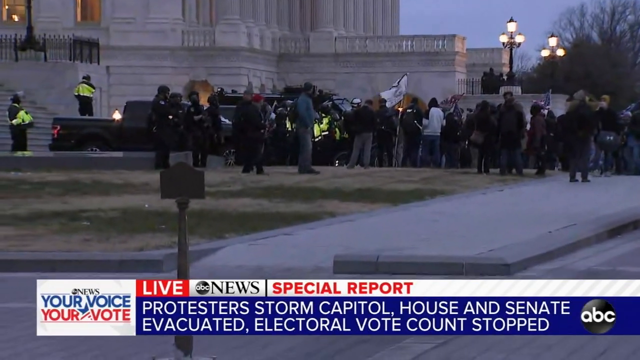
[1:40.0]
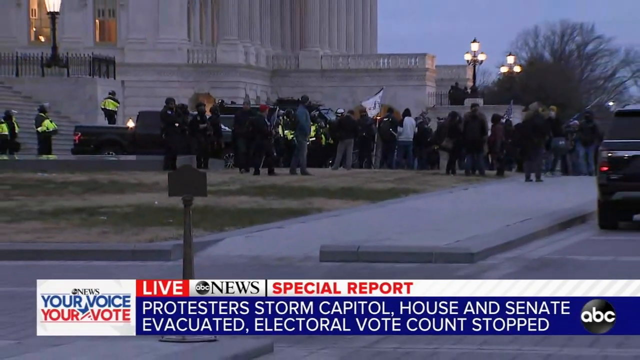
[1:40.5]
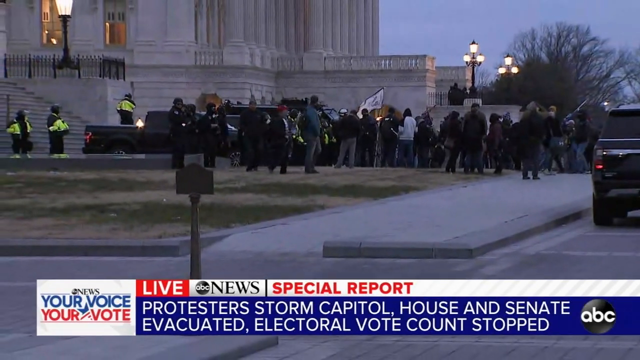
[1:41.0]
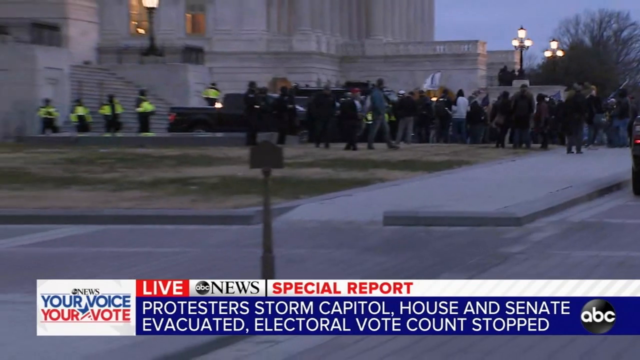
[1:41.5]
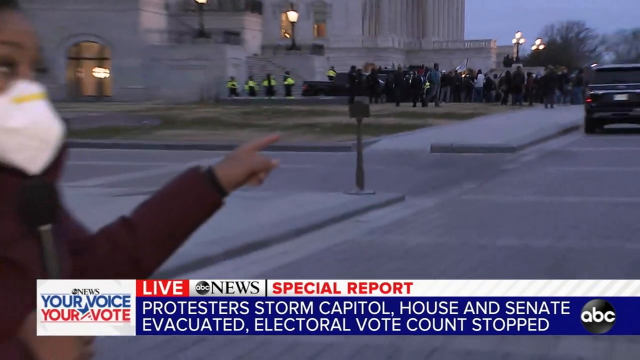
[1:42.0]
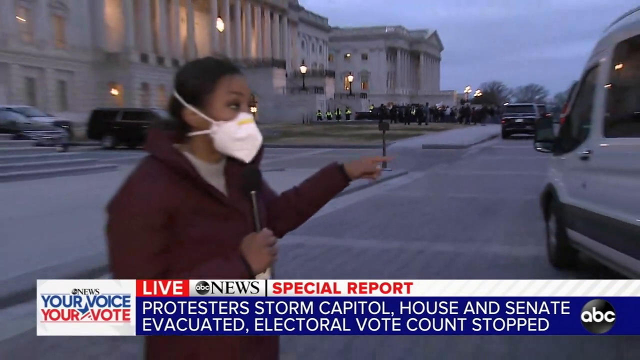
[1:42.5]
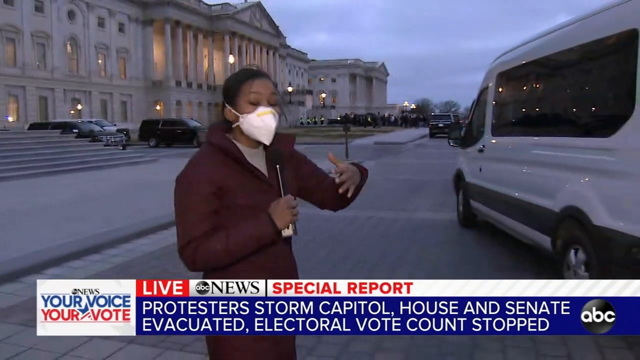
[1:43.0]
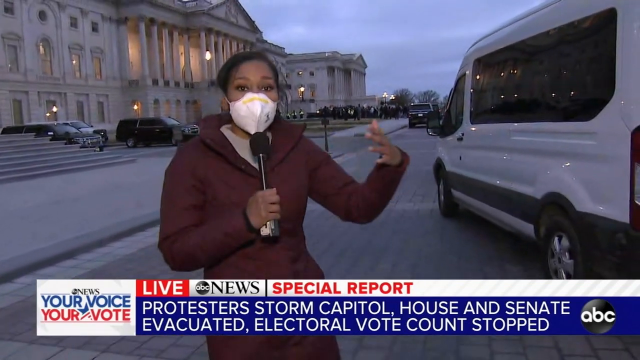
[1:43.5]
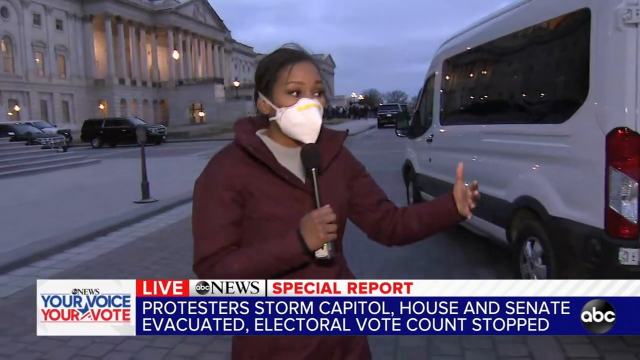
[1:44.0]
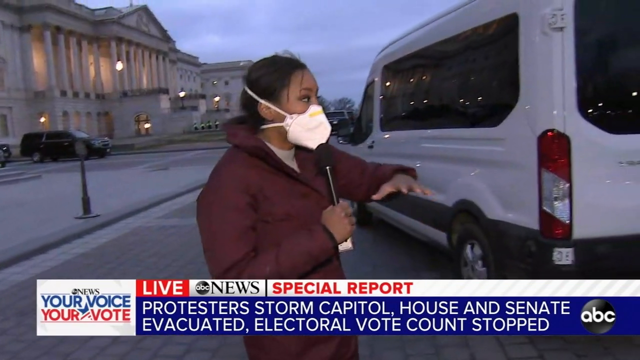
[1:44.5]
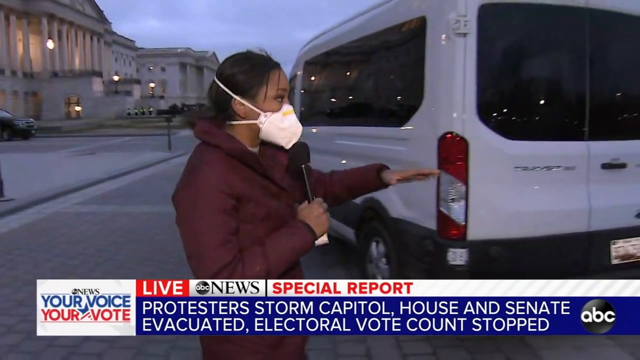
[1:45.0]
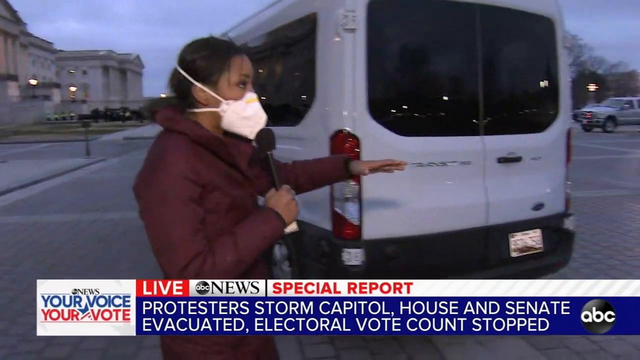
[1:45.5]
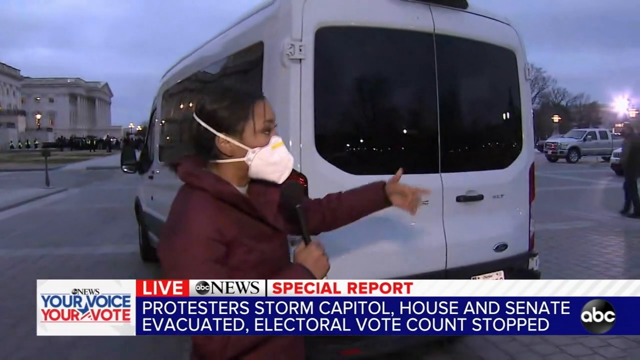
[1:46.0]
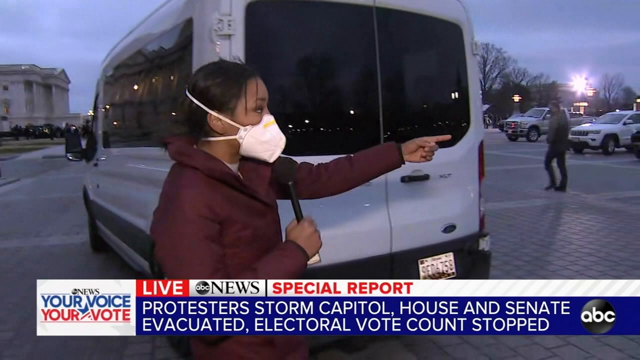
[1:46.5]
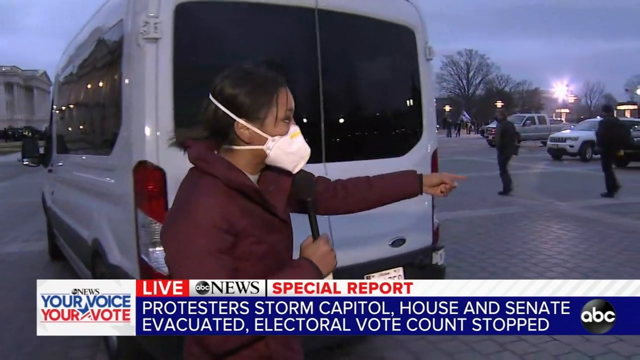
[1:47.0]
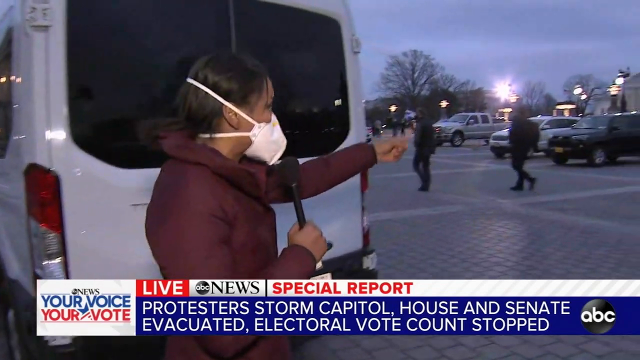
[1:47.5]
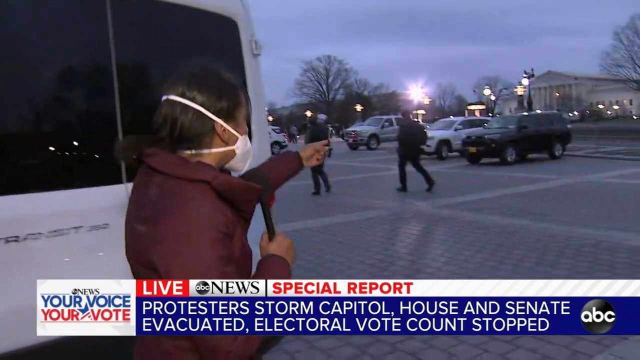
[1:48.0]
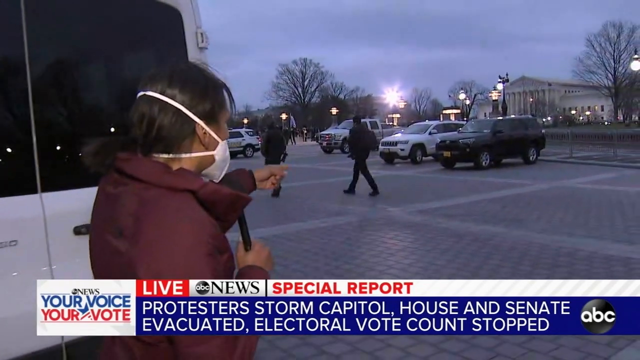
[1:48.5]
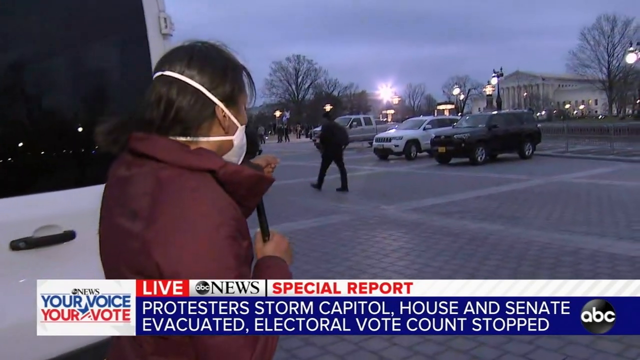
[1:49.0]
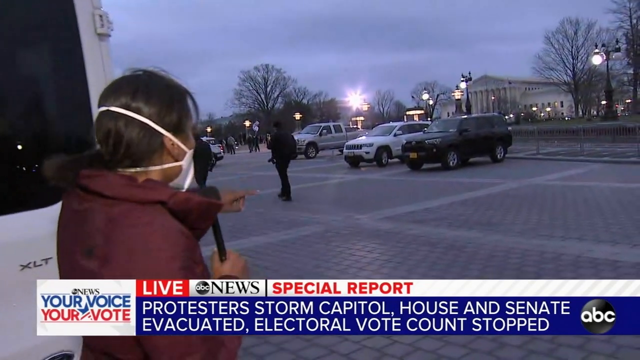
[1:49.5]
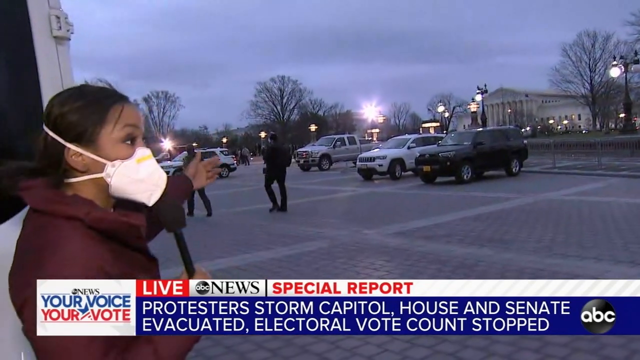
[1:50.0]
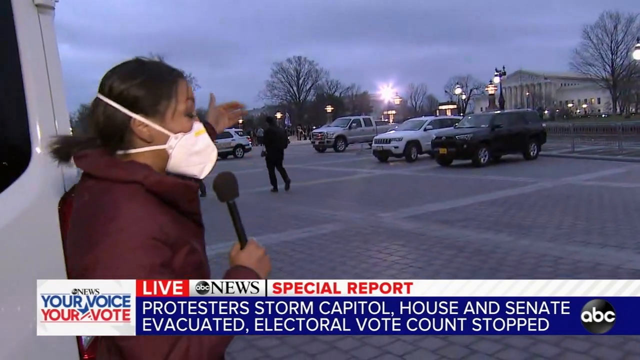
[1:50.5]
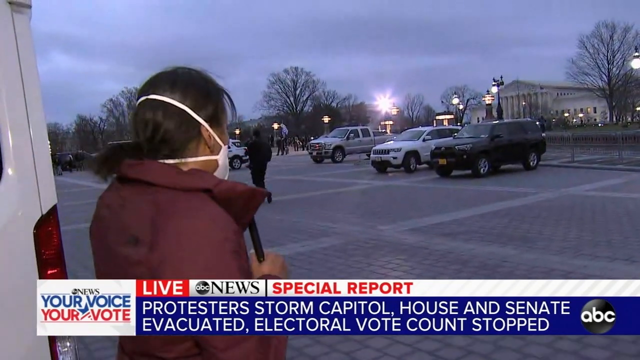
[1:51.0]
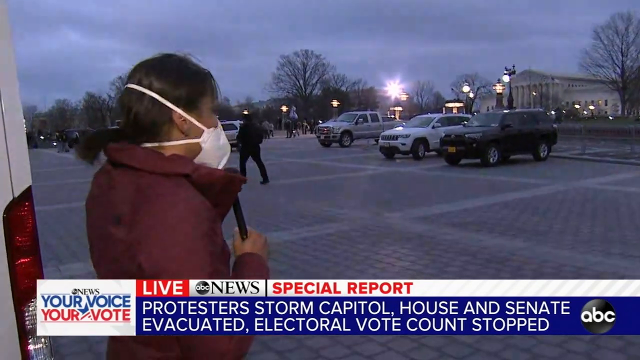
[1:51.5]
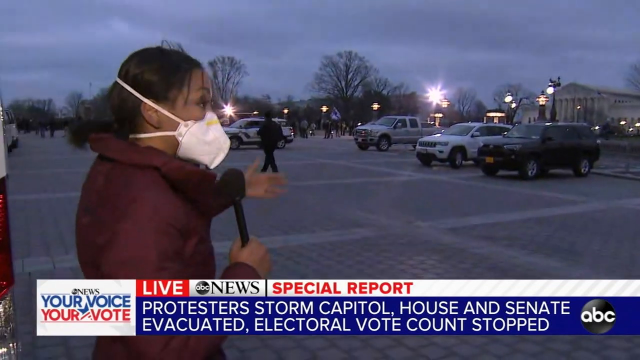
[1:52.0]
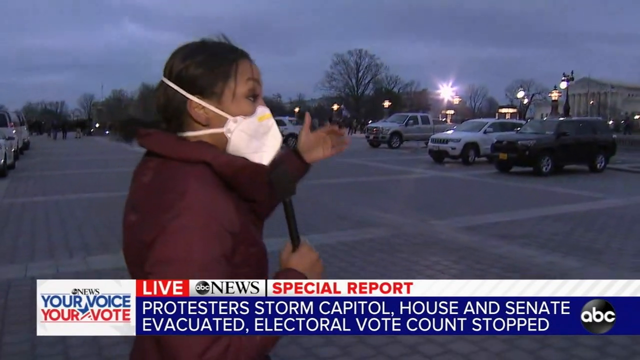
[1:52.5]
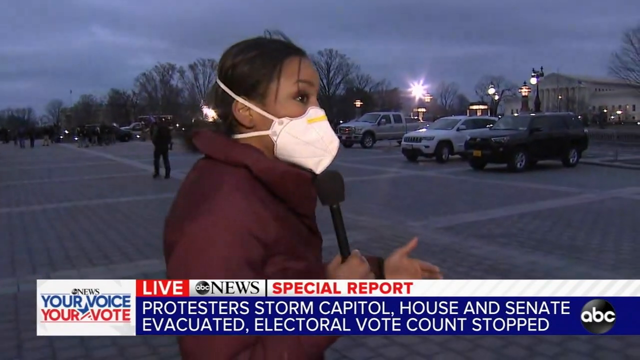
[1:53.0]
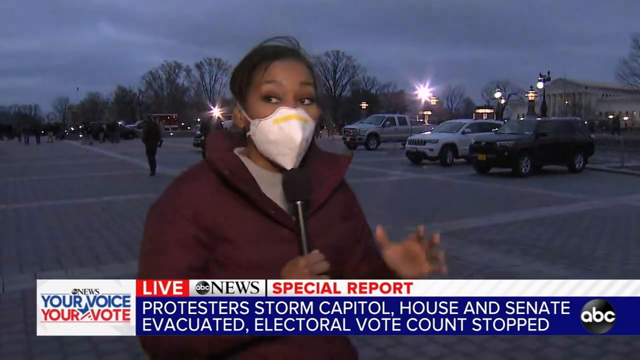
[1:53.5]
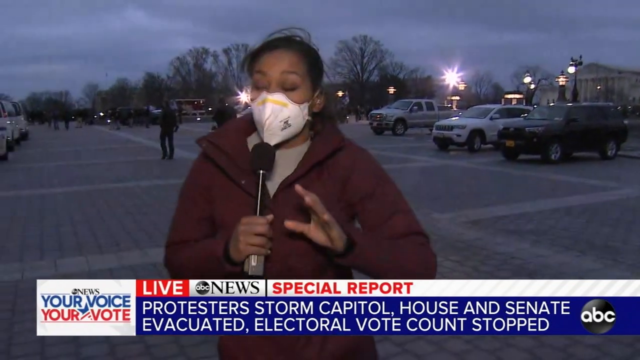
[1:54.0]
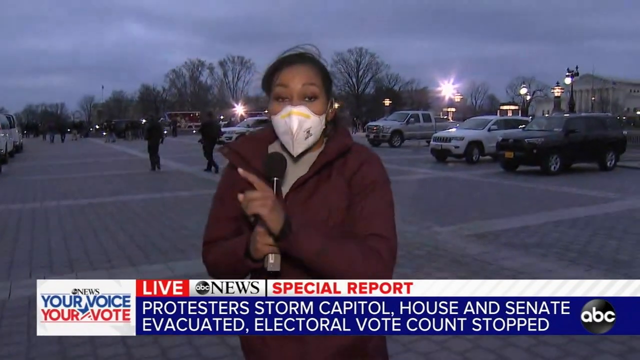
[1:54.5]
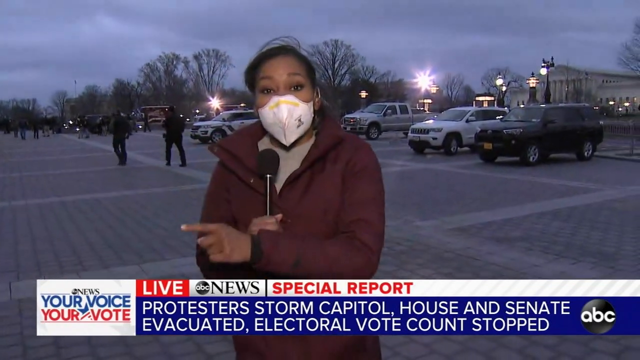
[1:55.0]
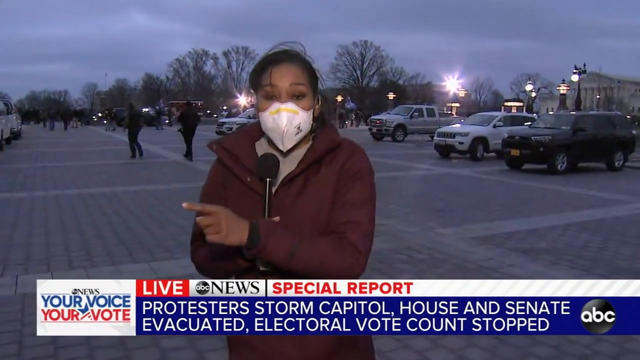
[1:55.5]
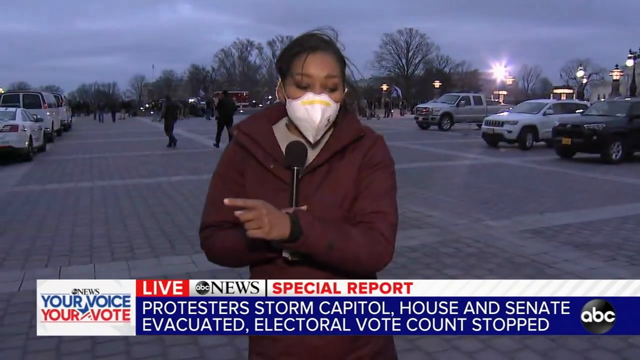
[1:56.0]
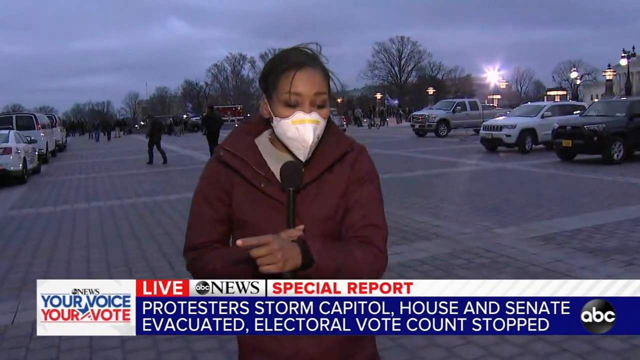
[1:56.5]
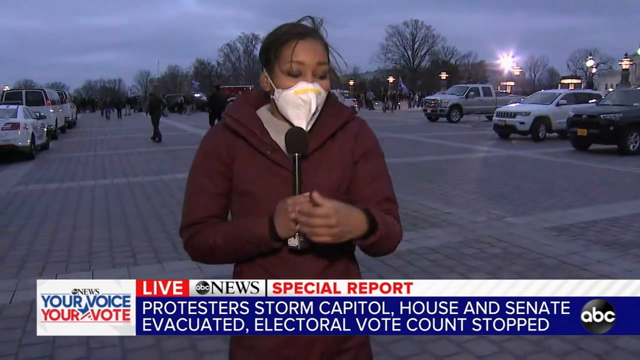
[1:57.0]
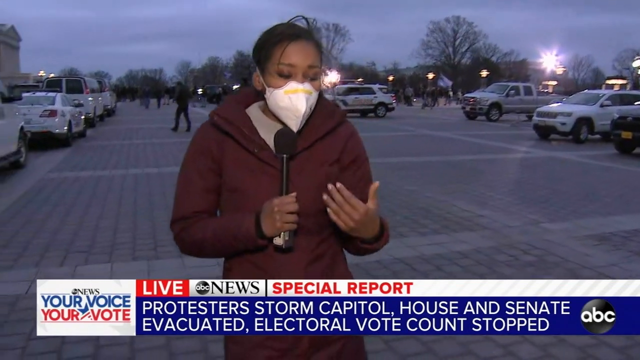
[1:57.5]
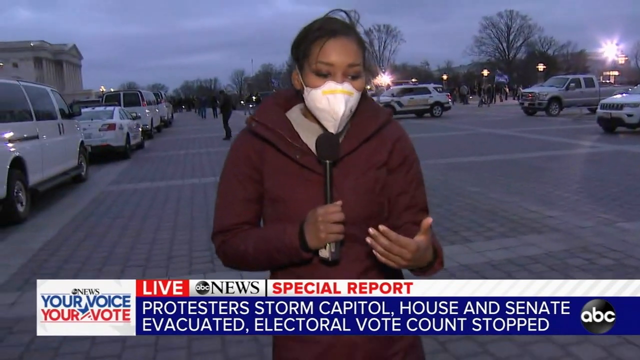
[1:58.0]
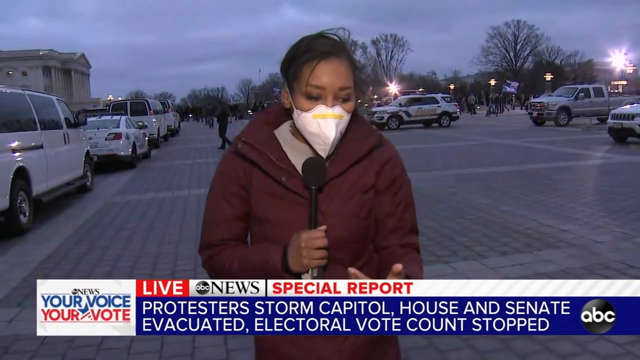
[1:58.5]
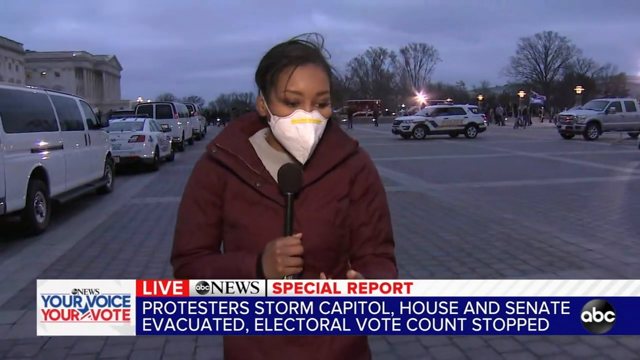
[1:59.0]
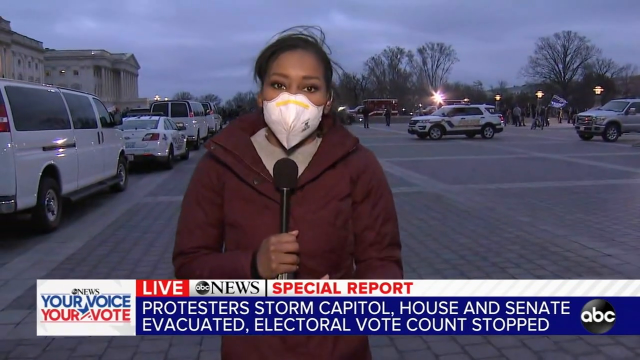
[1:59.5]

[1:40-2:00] People are standing outside. Police are there, along with a group of people standing outside the White House with their flag, apparently Trump supporters. People at the stadium are still chanting and waving their flag high.